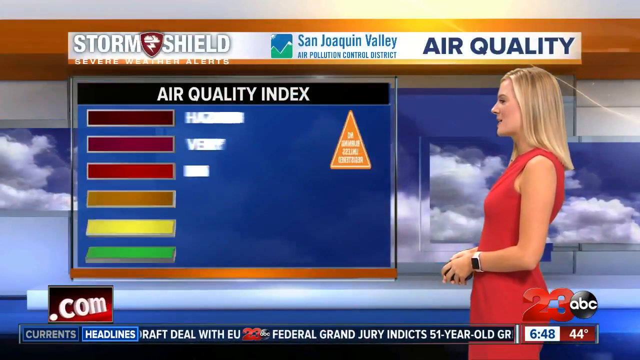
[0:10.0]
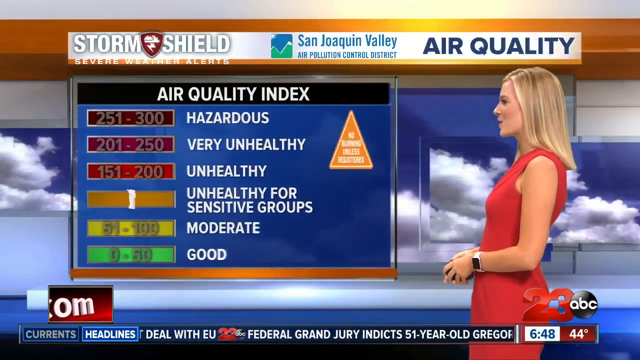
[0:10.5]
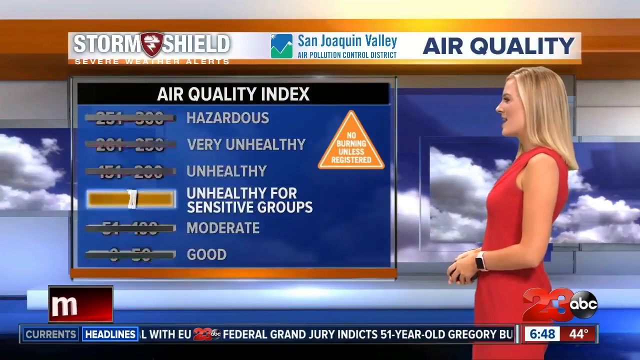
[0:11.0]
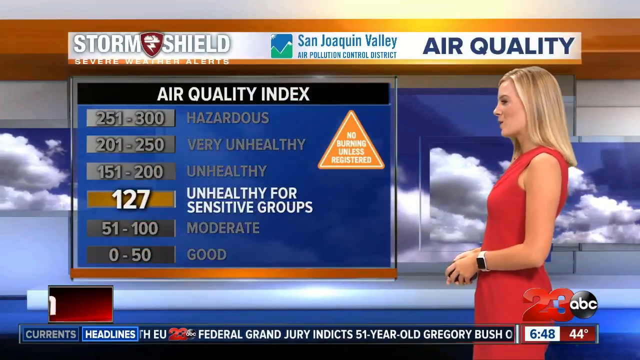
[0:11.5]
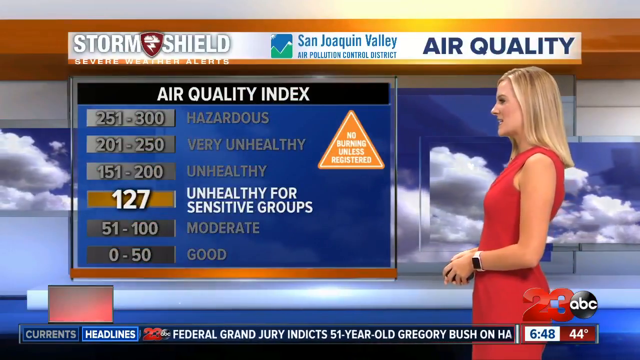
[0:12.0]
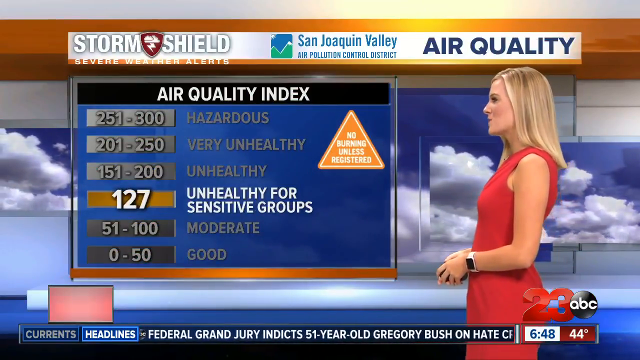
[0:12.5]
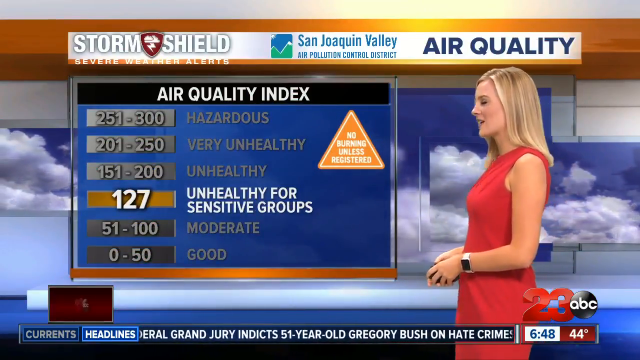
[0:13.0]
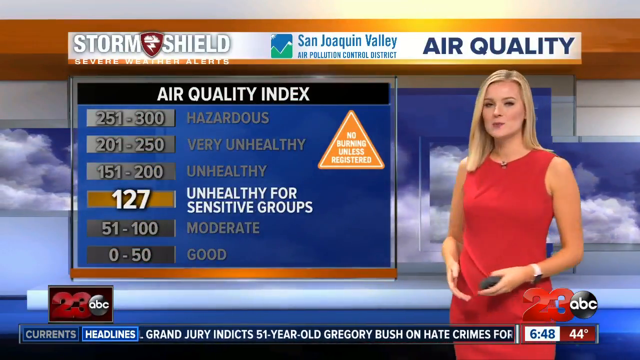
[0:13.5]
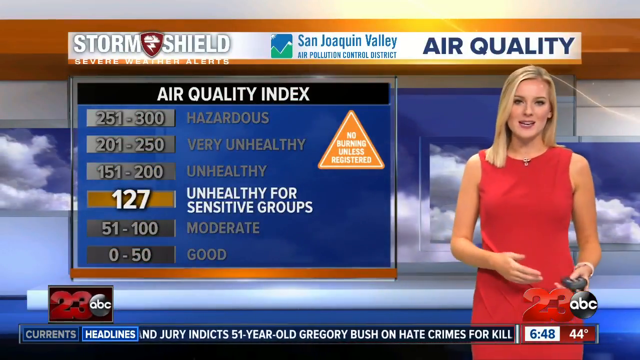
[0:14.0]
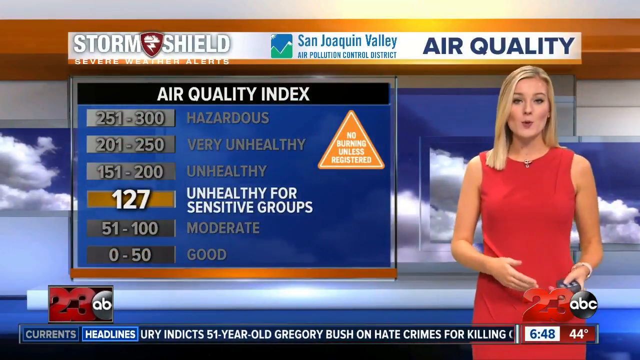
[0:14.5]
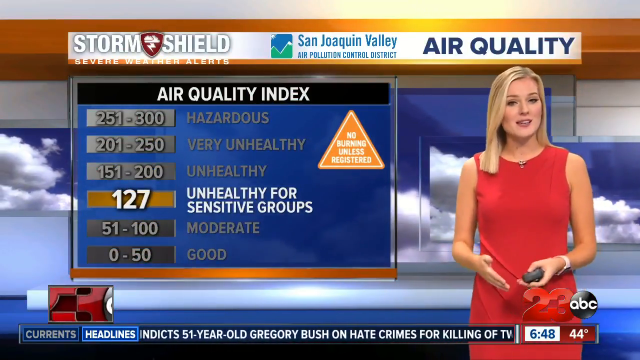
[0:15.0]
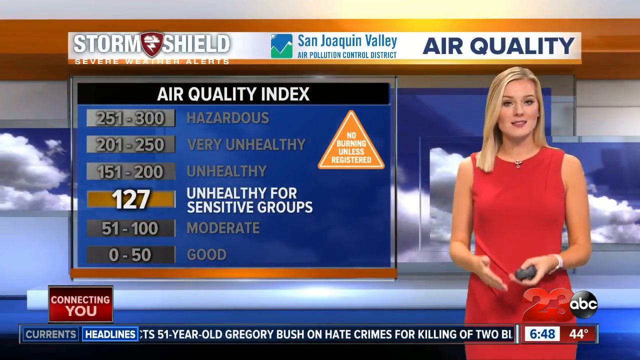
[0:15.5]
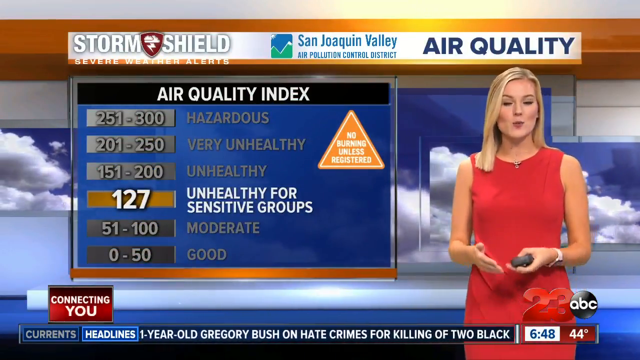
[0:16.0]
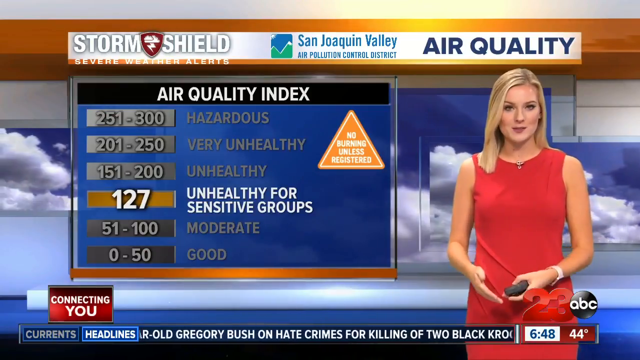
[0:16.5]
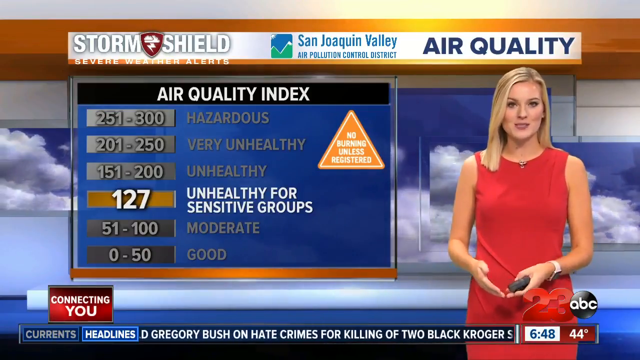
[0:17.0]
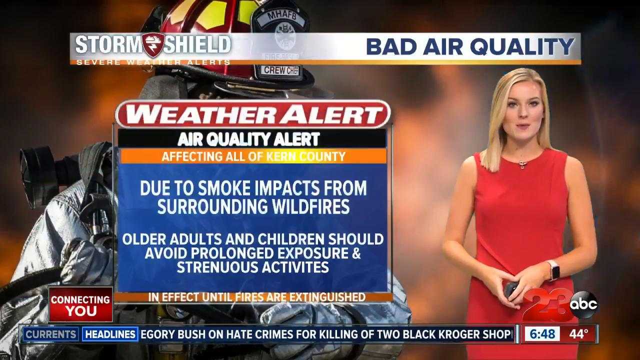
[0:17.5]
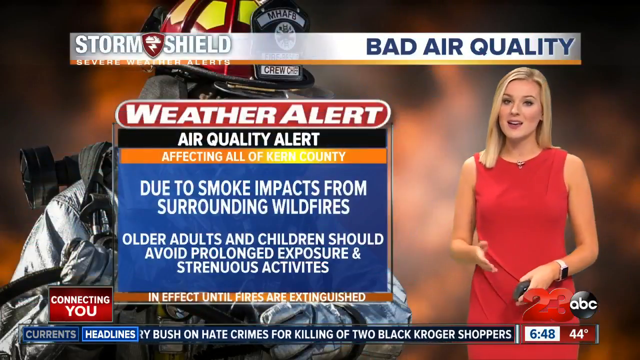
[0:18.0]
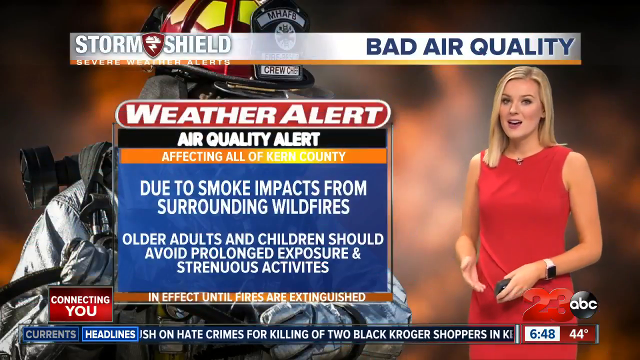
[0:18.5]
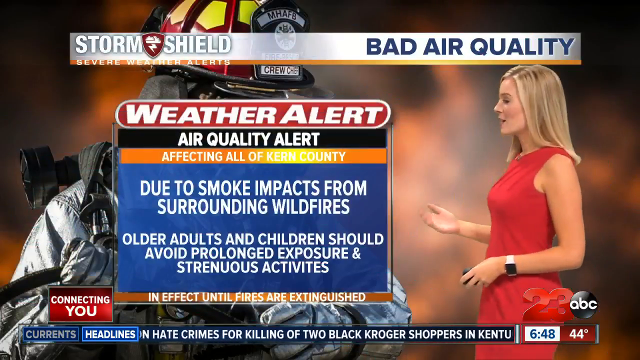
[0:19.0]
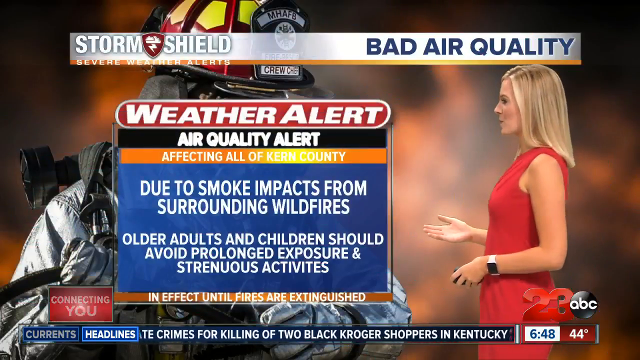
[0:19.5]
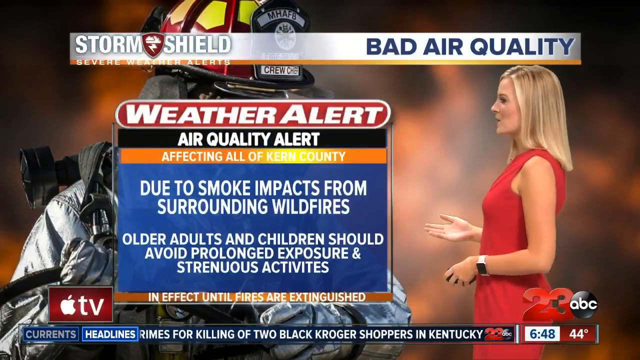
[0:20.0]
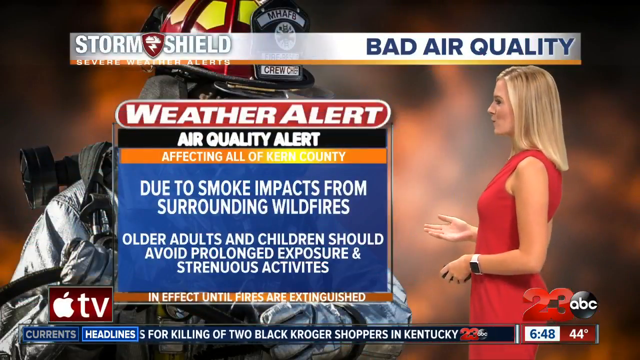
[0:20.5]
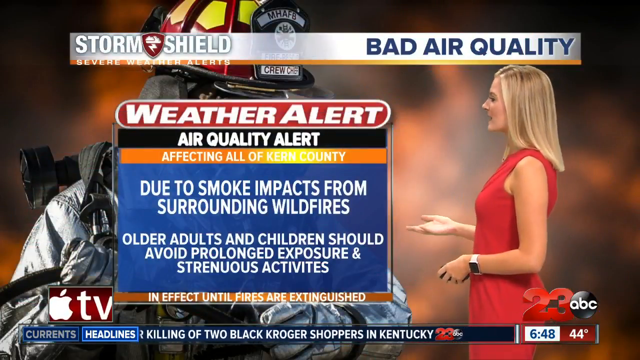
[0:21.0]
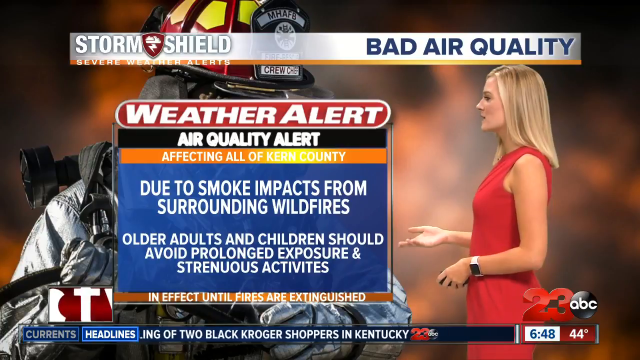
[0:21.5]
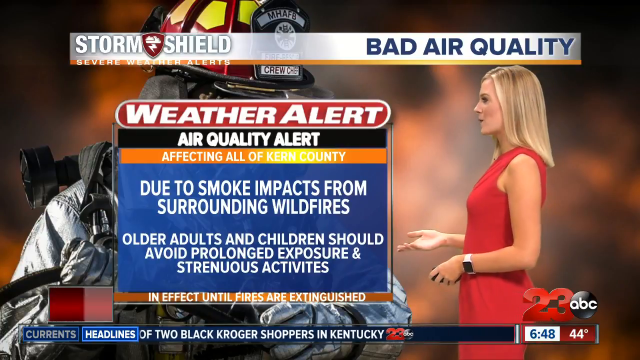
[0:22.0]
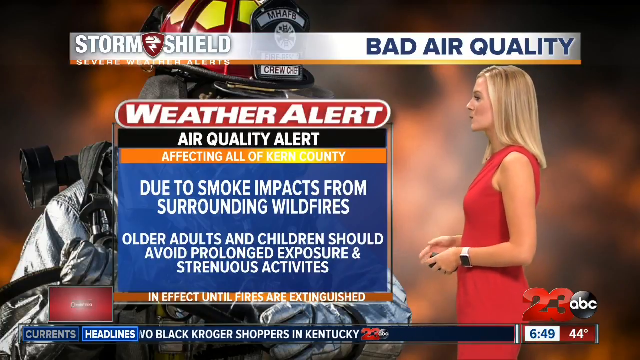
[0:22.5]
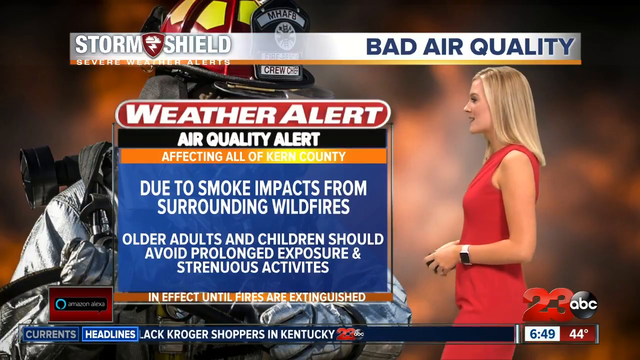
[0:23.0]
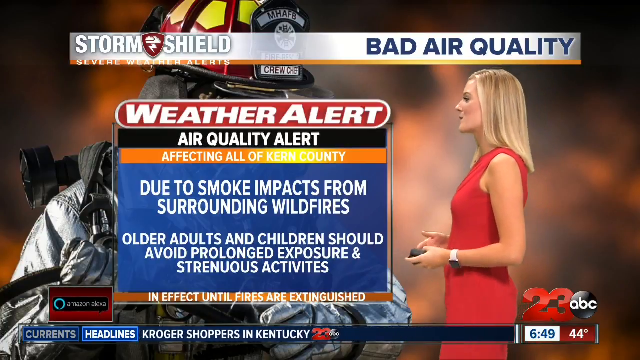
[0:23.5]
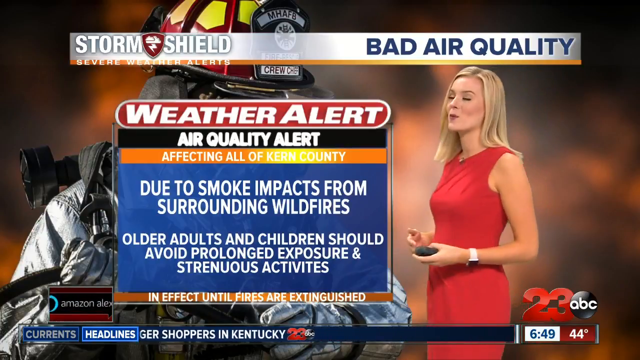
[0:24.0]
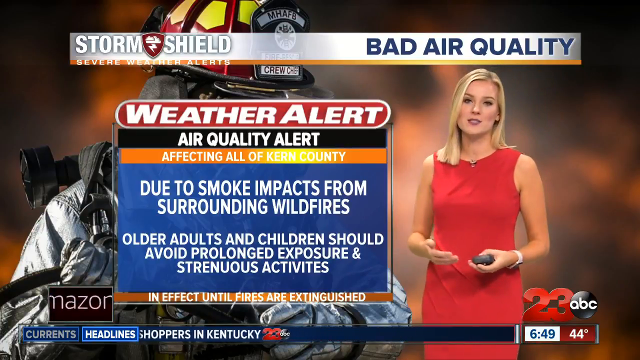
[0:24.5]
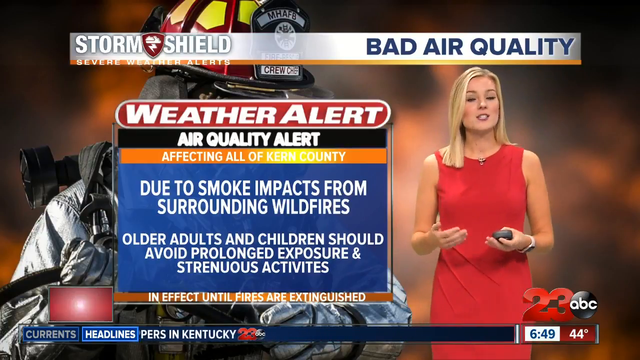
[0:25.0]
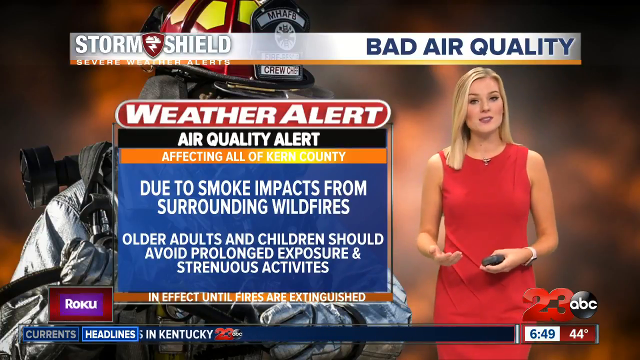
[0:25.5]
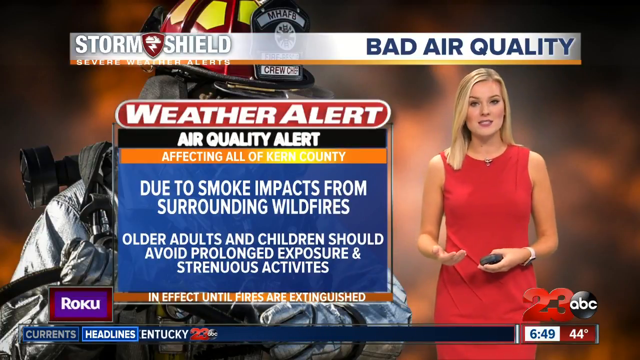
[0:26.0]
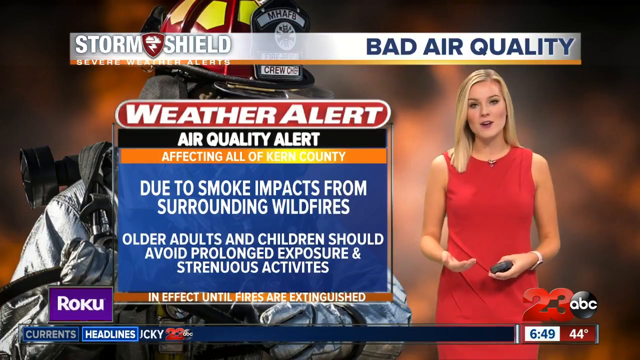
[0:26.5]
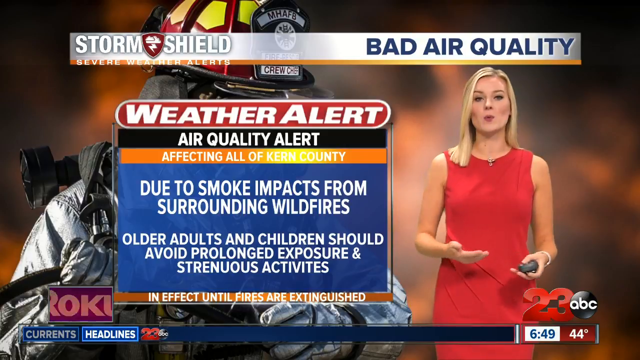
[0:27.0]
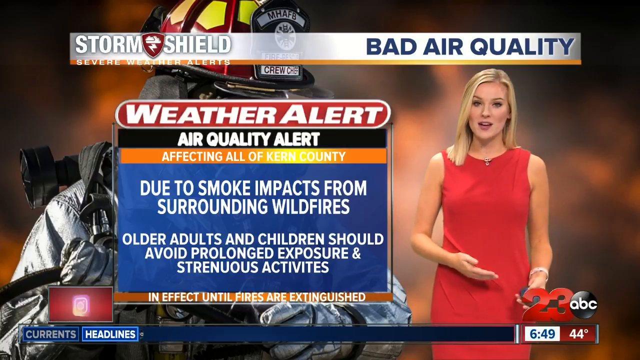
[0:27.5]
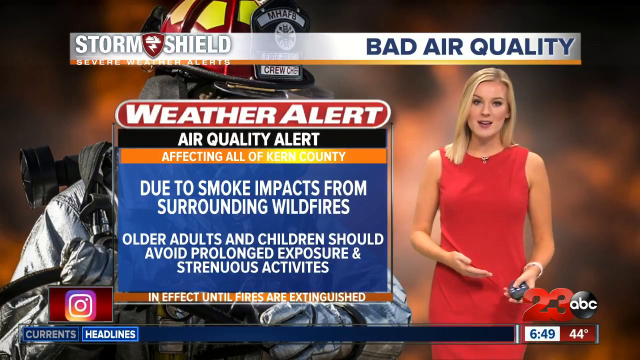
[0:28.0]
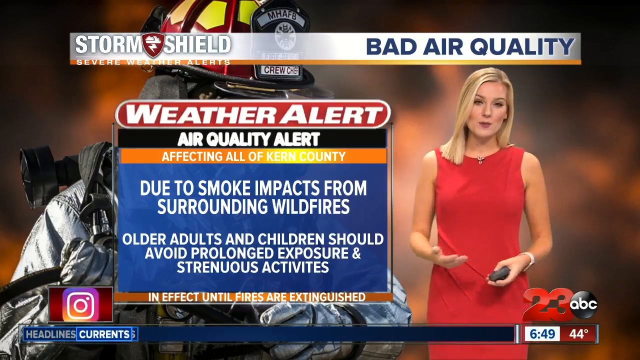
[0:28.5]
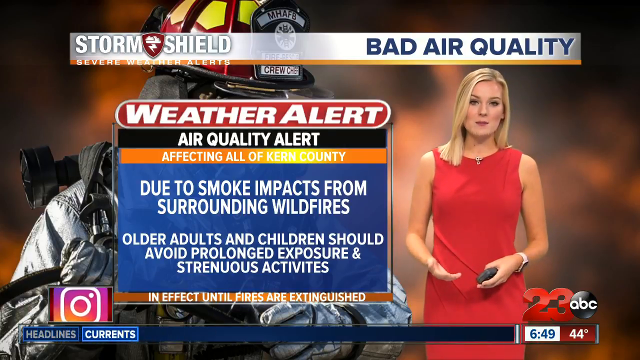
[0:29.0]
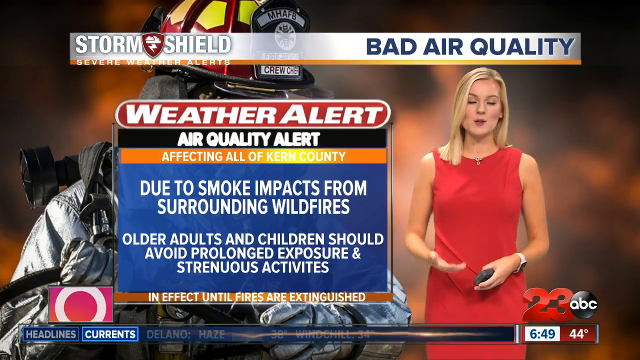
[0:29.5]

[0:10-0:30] The air quality index continues to expand and shows a reading of 127, representing an unhealthy for sensitive groups warning. In a sleek flyaway transition, the background reveals a firefighter fighting flames, and the graphic in front reads "weather alert, air quality alert affecting all of Kern County. Due to smoke impacts from surrounding wildfires, older adults and children should avoid prolonged exposure and strenuous activities." The blonde woman in the red dress turns to the right again while continuing to speak, then turns back toward the camera. She gestures with her right hand, moving it from side to side and at an angle to her lower left. She is wearing an Apple Watch with a light-colored band. Directly in front of her are the number 23 and the ABC logo, seemingly indicating the channel is 23ABC.